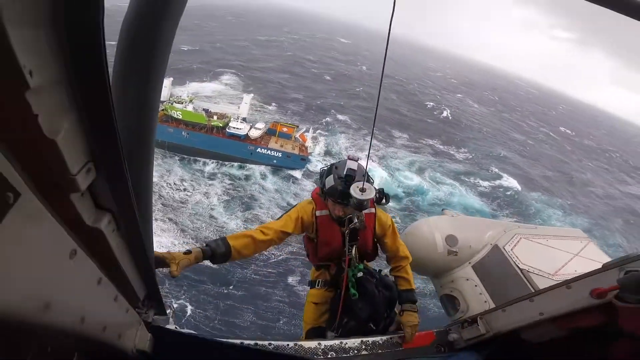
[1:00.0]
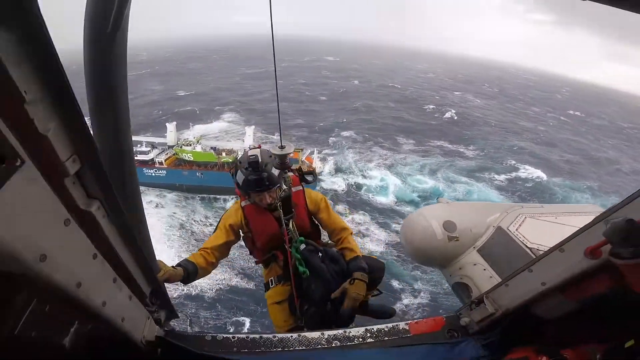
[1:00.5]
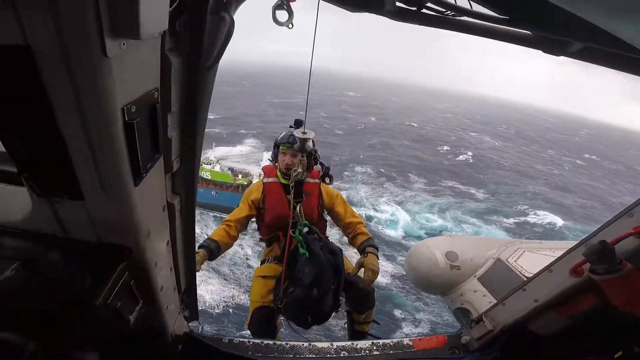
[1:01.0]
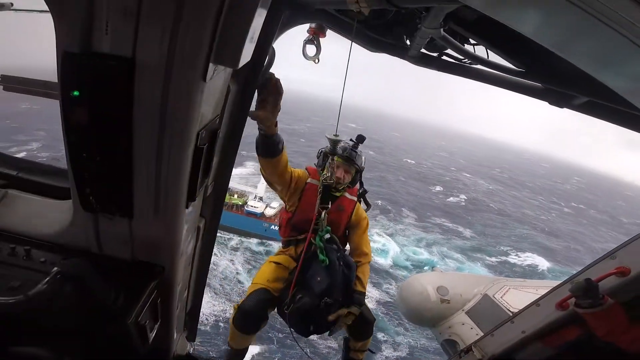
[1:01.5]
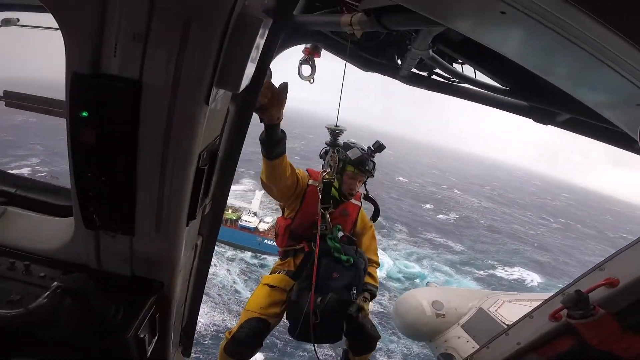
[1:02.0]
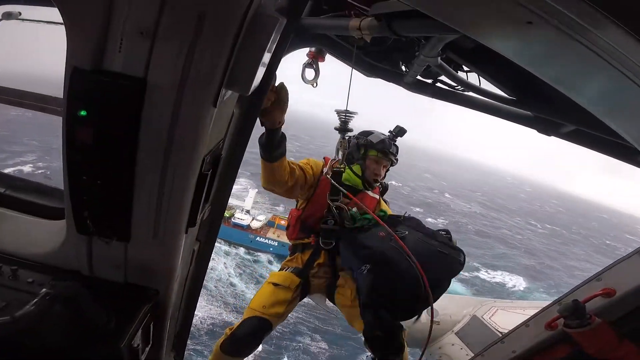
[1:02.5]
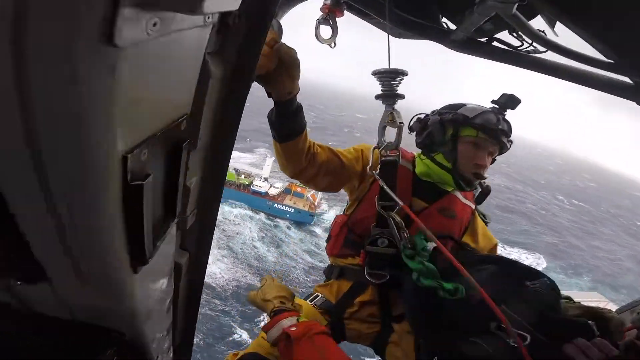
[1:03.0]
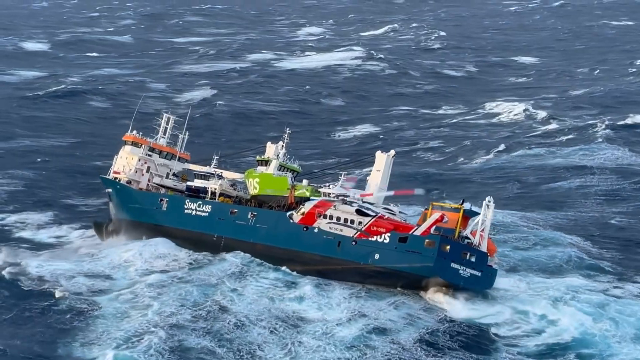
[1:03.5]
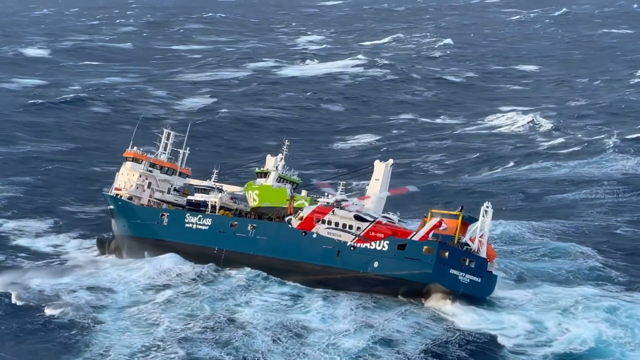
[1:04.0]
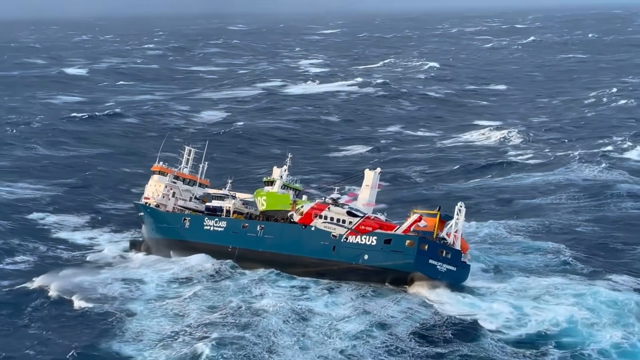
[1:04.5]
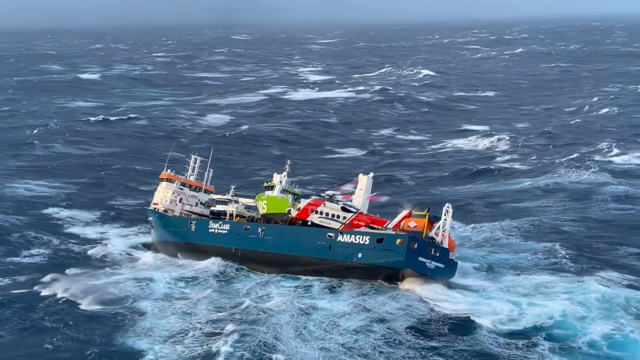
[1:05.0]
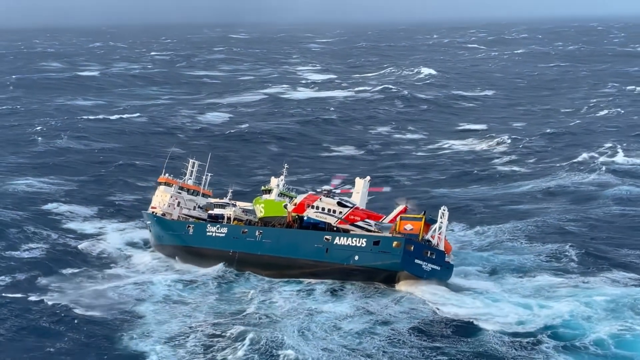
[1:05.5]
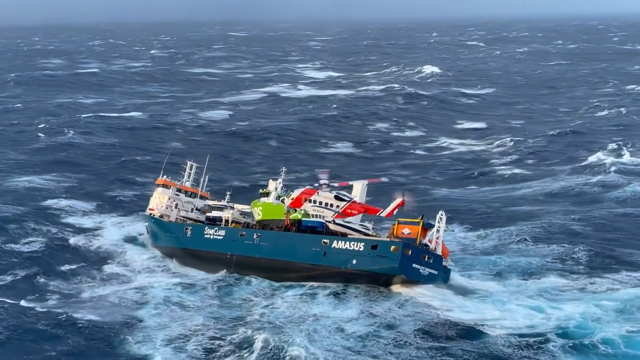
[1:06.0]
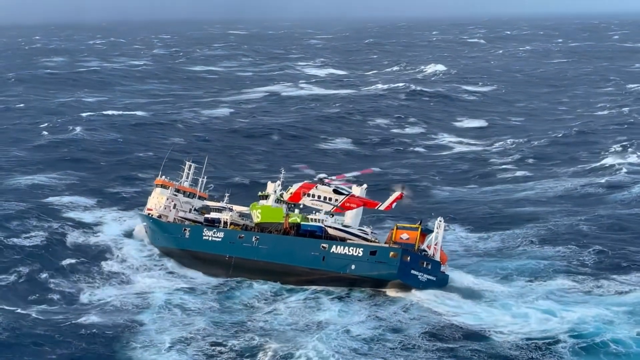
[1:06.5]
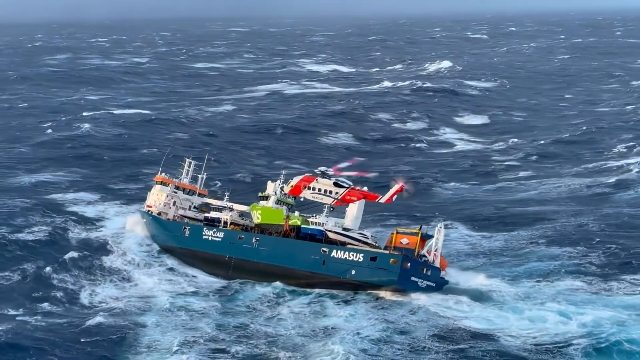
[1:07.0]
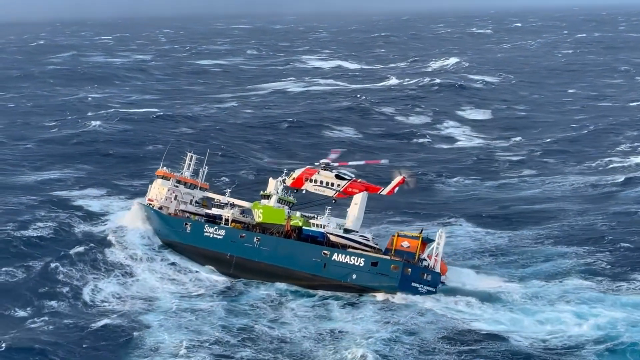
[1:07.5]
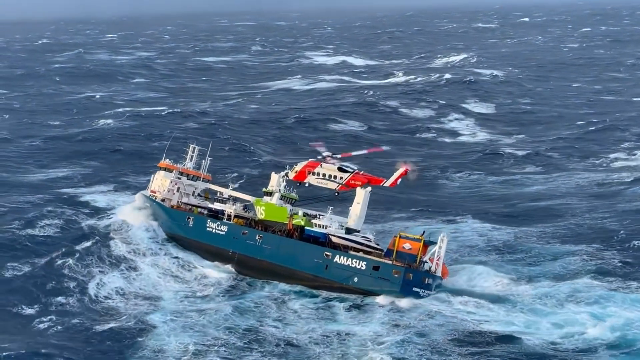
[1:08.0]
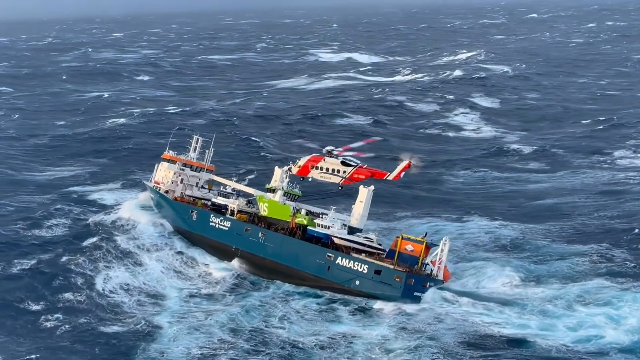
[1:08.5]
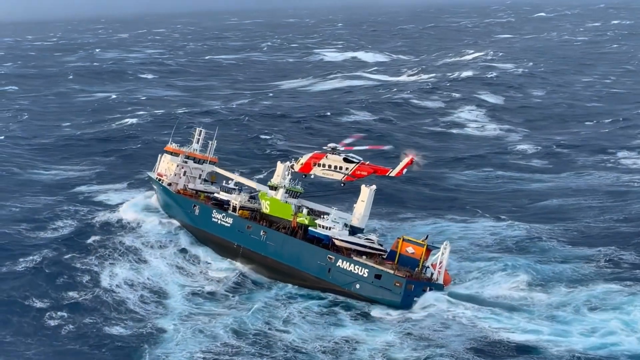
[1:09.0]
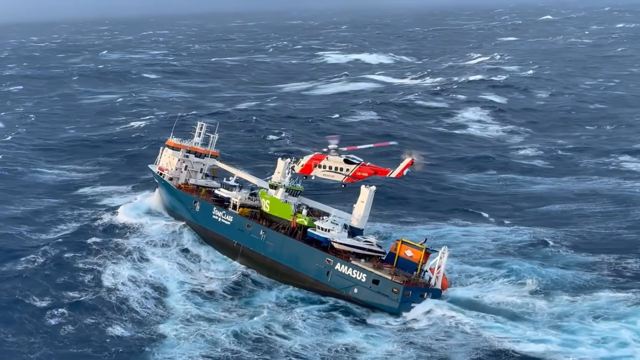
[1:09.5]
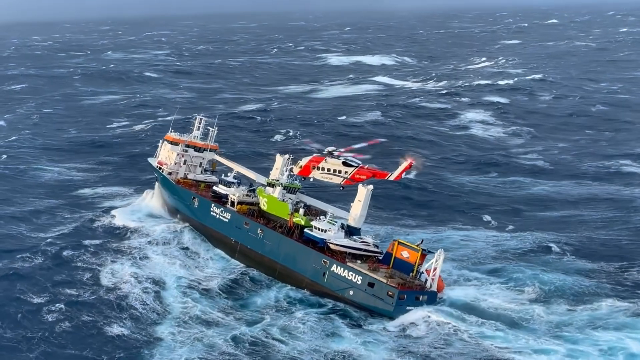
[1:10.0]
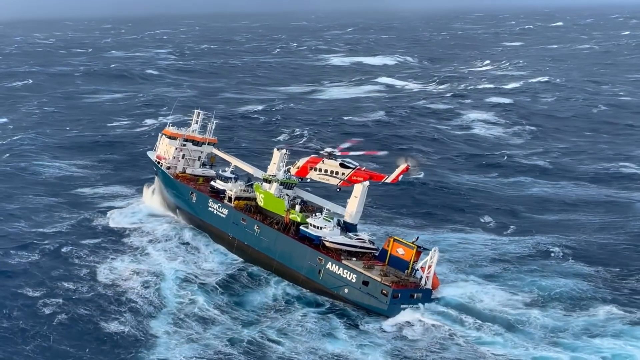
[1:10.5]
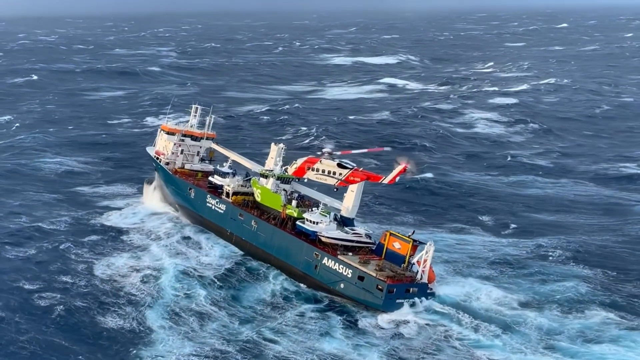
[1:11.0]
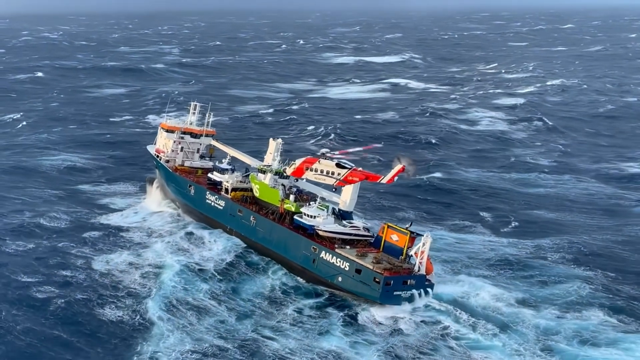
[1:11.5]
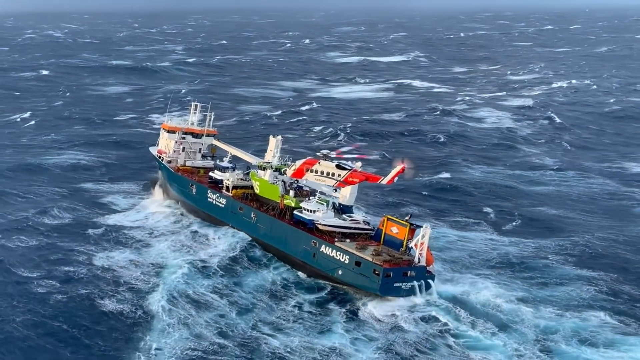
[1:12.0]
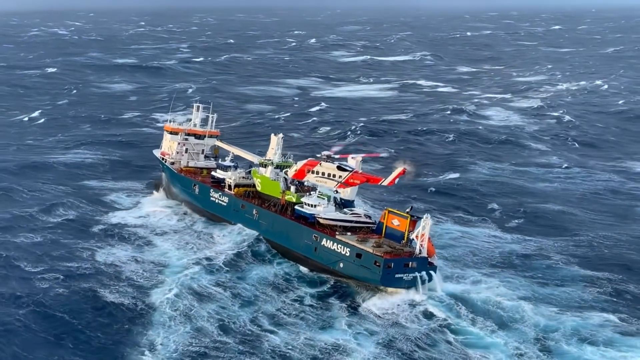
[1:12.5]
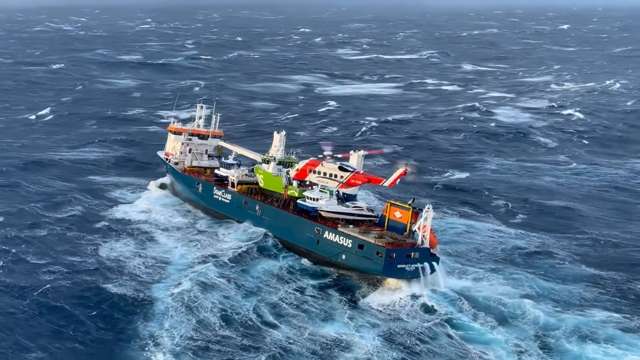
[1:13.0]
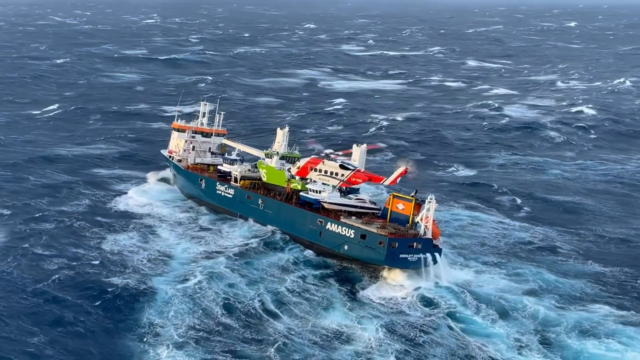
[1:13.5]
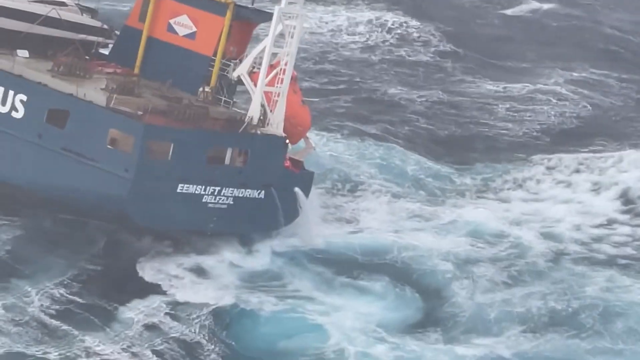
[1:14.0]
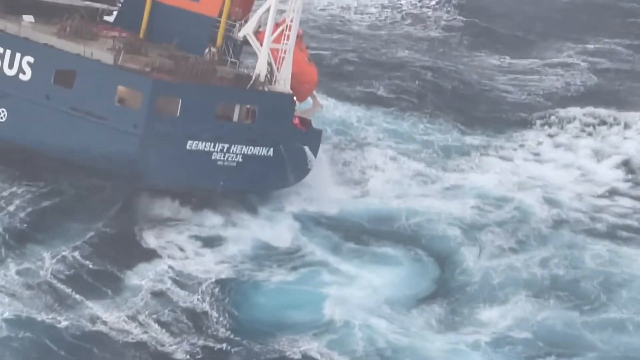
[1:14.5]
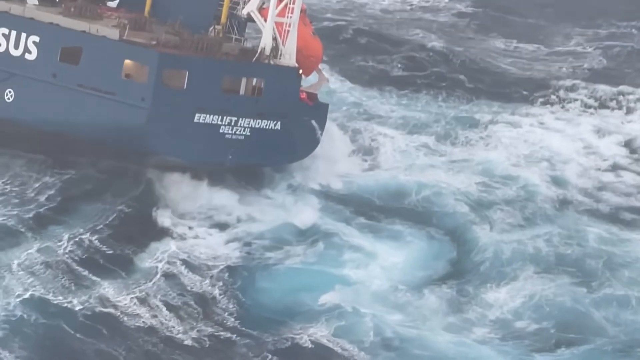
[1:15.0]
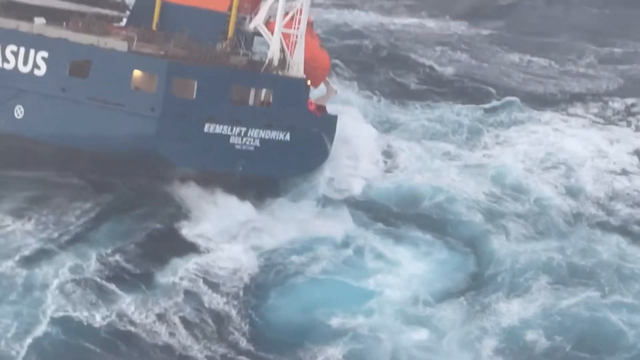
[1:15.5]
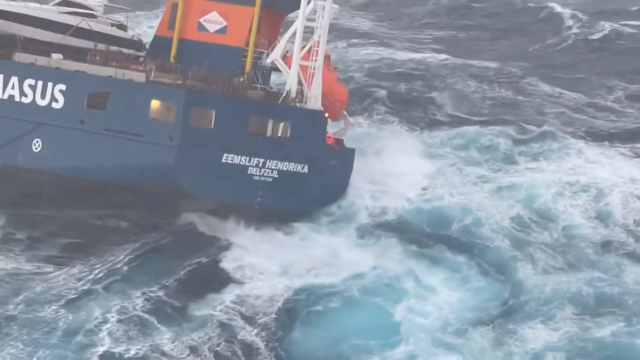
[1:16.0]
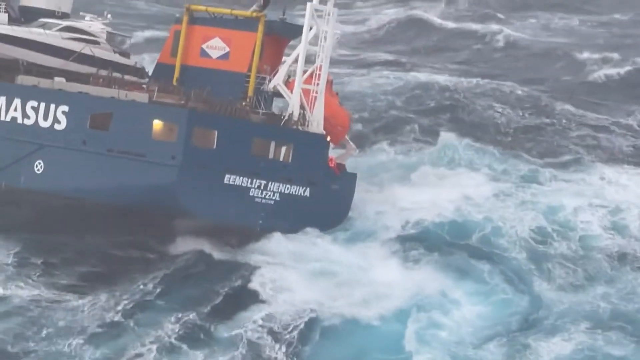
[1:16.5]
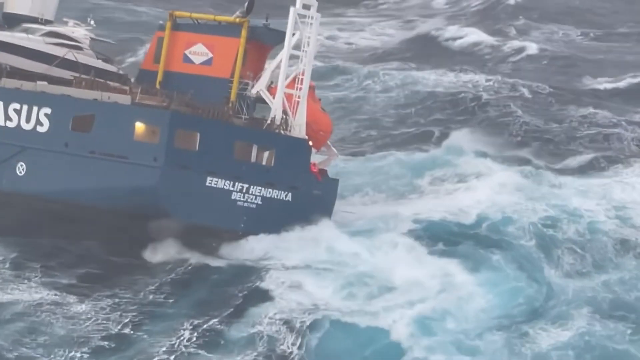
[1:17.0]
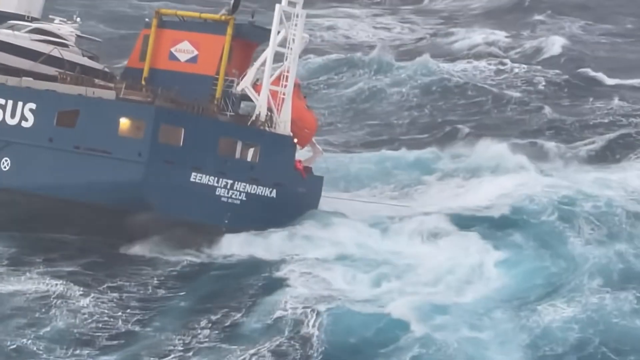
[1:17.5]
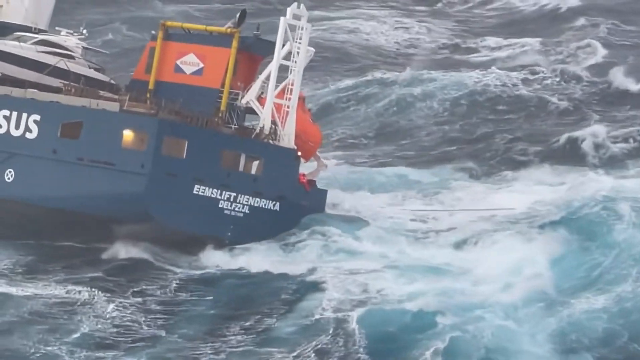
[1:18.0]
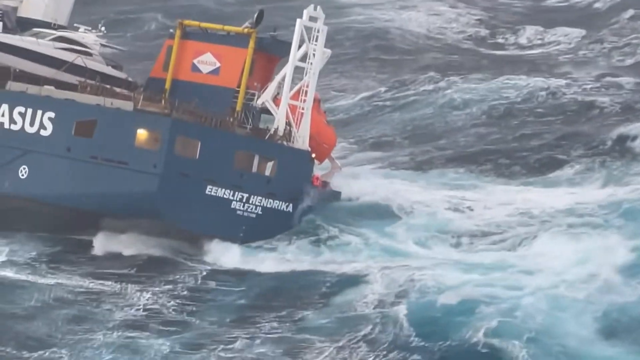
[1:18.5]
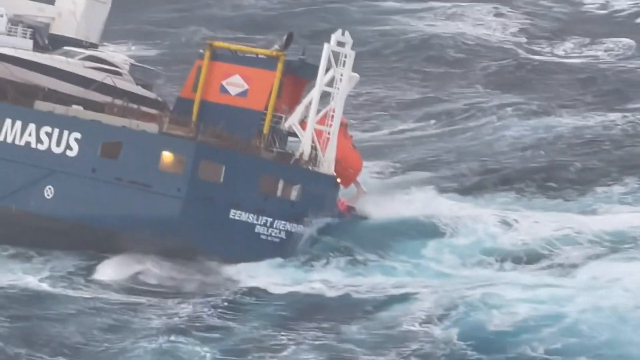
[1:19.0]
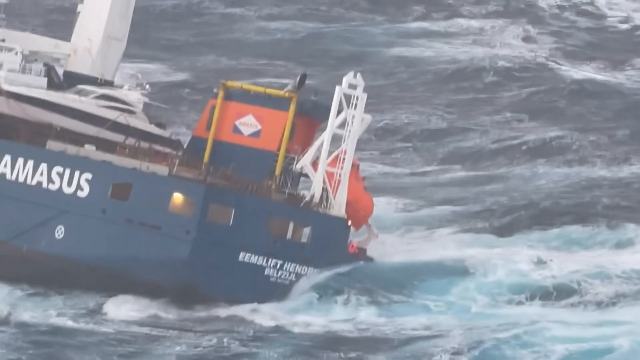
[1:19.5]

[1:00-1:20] The person gets onto the helicopter, and a distant view shows the red and white helicopter flying quite close to the blue vessel, which moves up and down on the sea surface. The waves seem pretty aggressive, and the vessel seems quite slanted, possibly with something wrong with it. The camera somewhat zooms in on the back of the vessel, showing some water coming out of it. The helicopter flies just above the vessel.